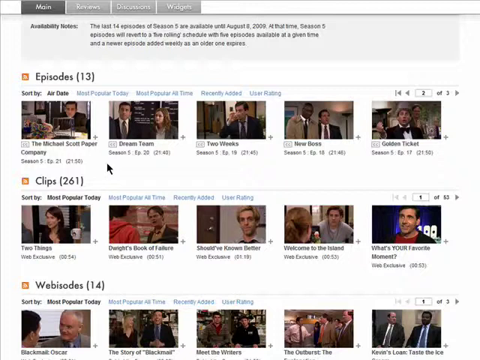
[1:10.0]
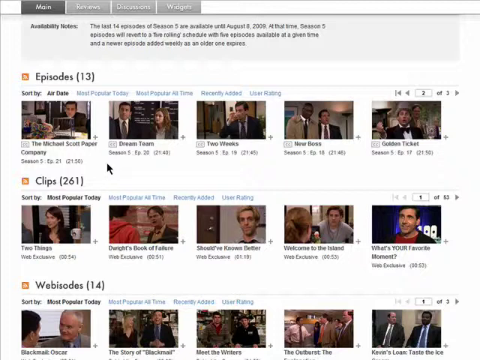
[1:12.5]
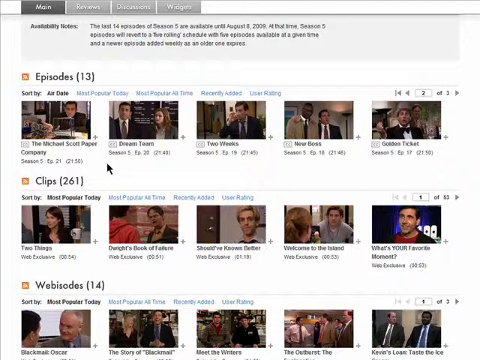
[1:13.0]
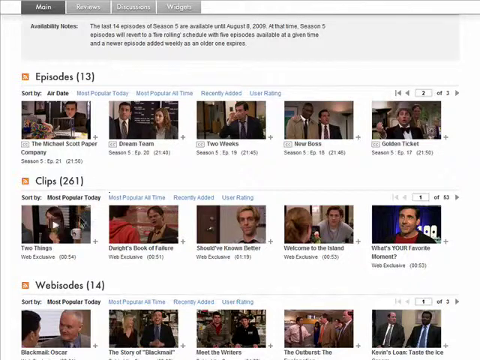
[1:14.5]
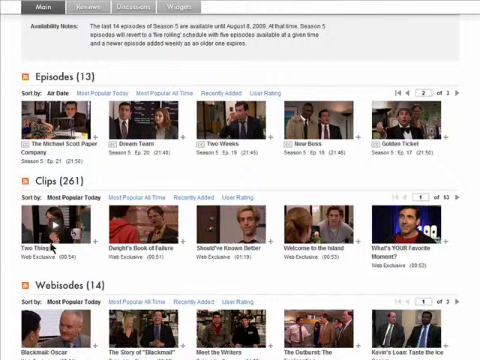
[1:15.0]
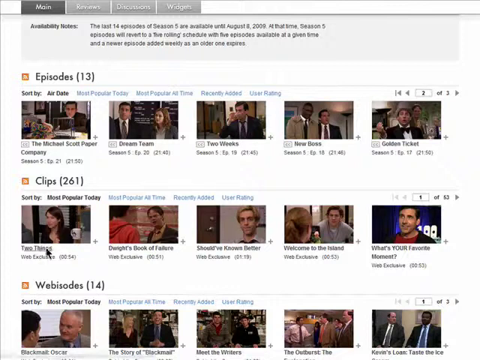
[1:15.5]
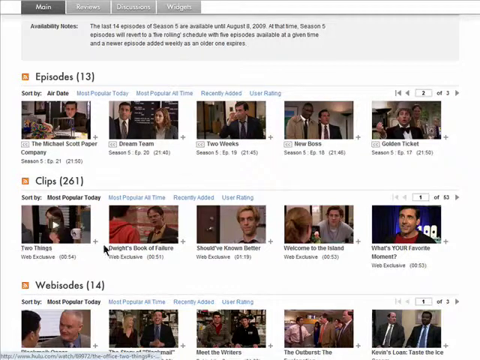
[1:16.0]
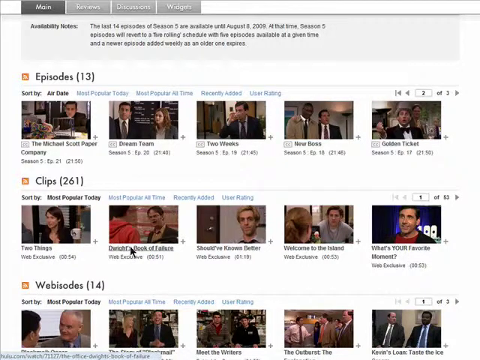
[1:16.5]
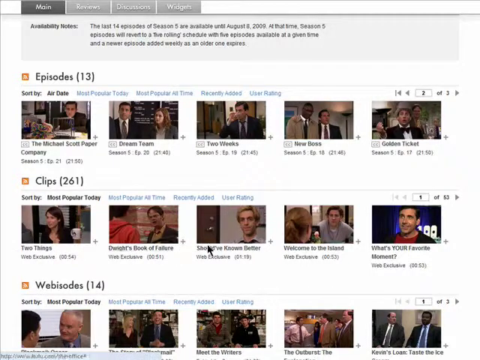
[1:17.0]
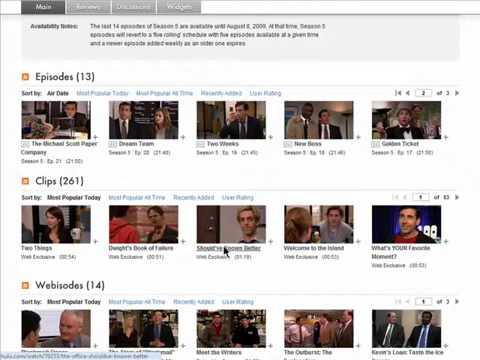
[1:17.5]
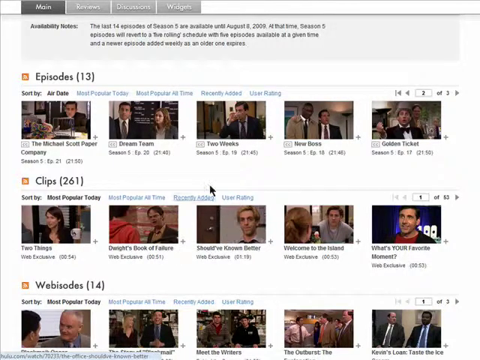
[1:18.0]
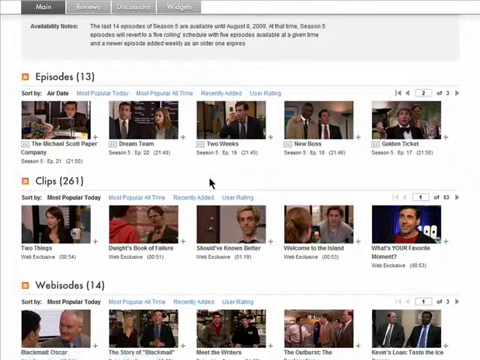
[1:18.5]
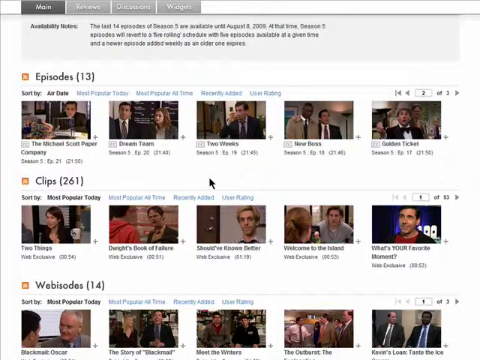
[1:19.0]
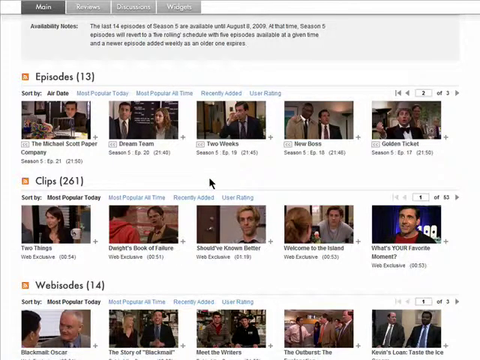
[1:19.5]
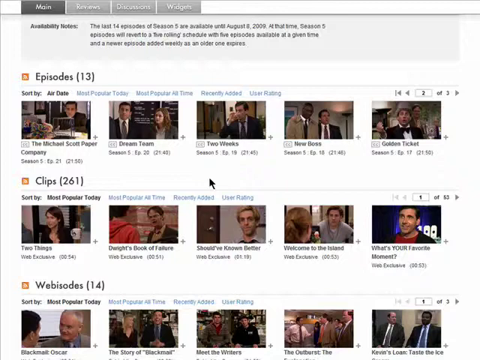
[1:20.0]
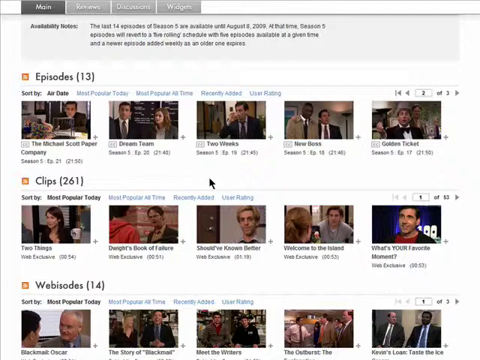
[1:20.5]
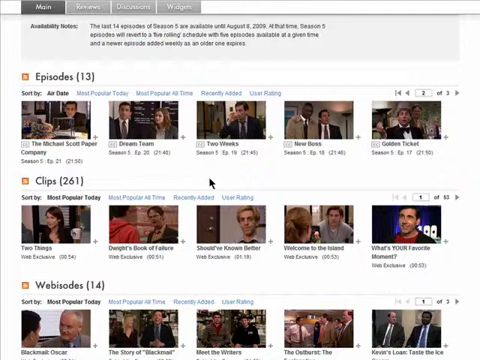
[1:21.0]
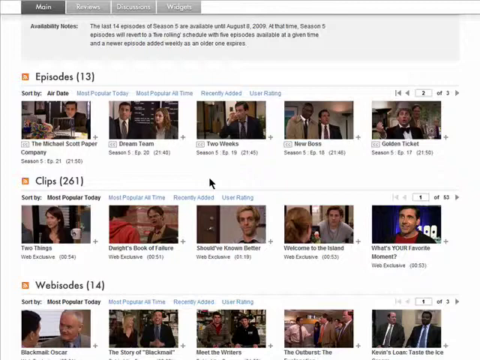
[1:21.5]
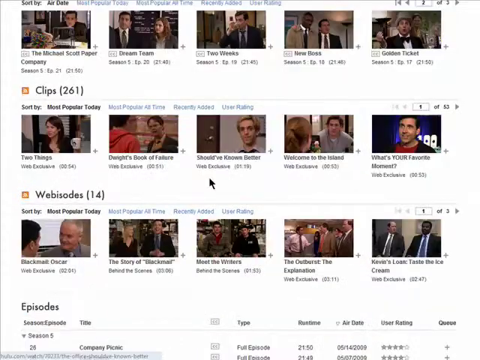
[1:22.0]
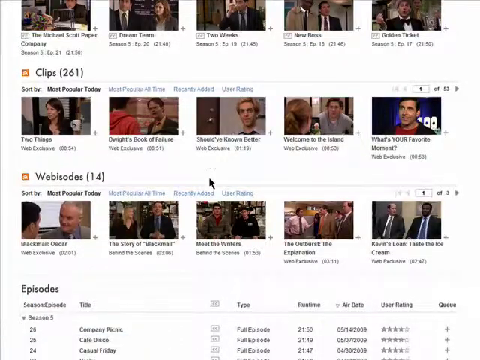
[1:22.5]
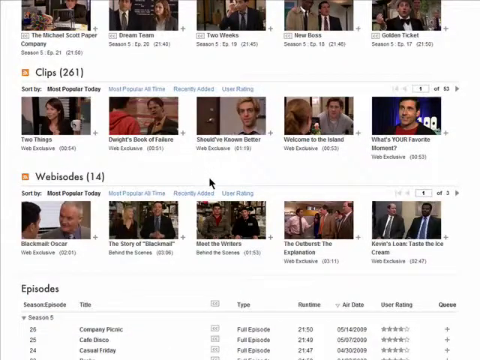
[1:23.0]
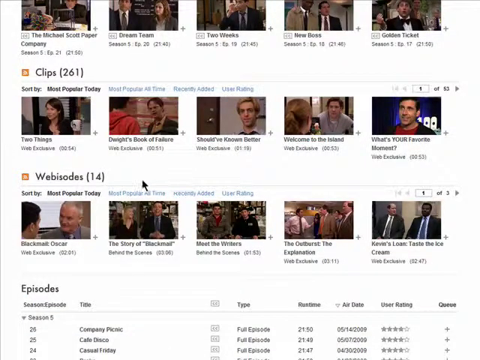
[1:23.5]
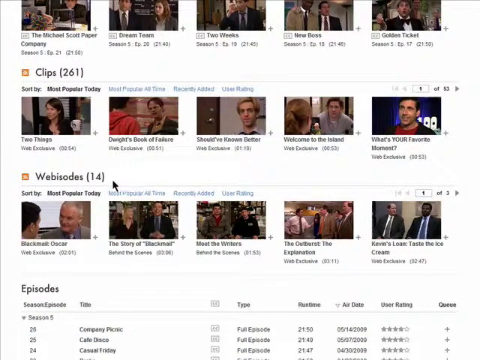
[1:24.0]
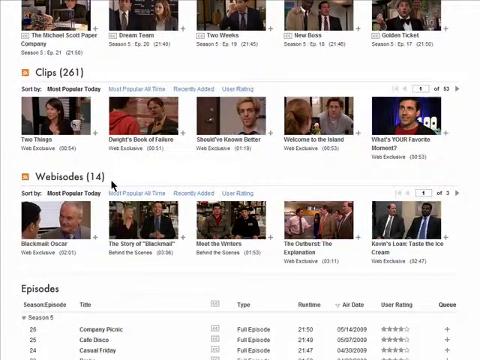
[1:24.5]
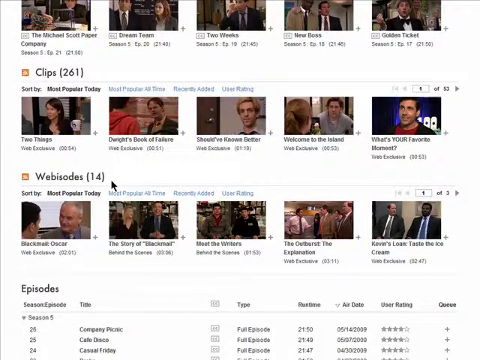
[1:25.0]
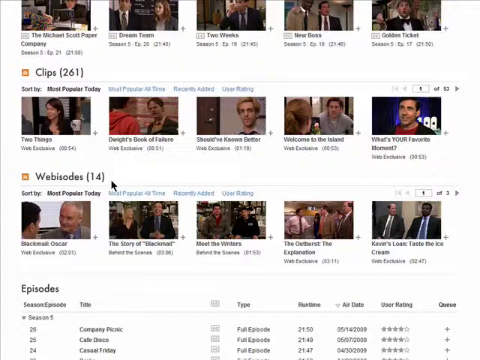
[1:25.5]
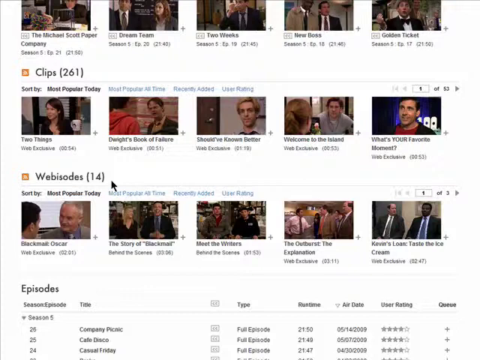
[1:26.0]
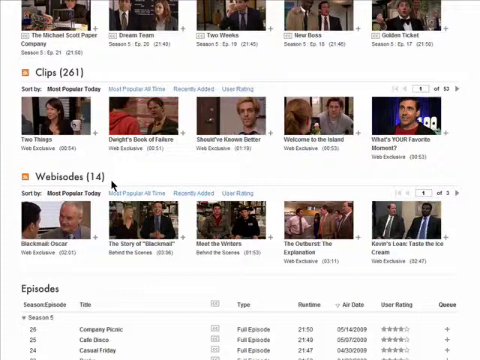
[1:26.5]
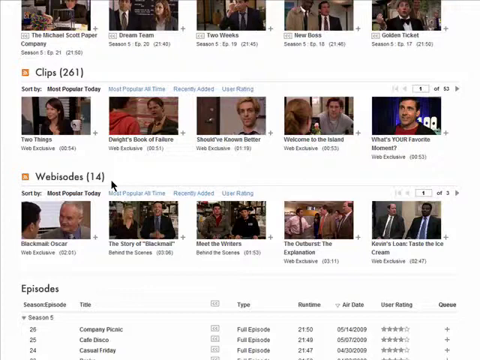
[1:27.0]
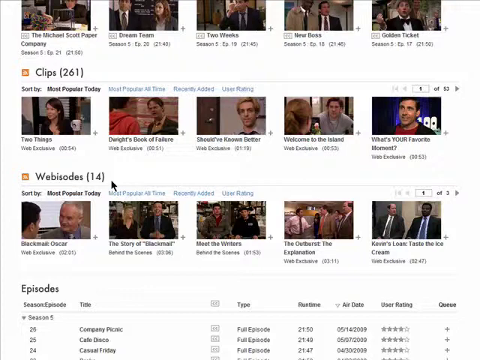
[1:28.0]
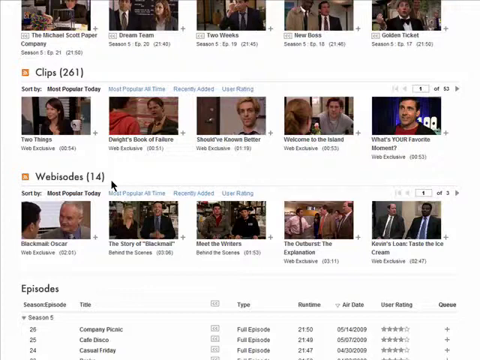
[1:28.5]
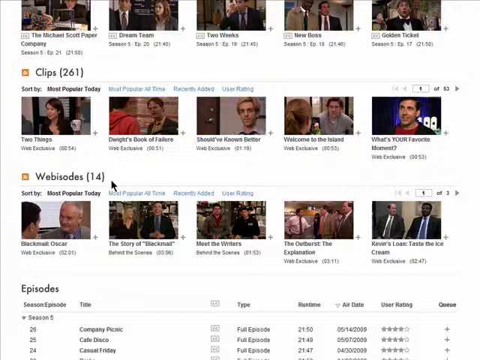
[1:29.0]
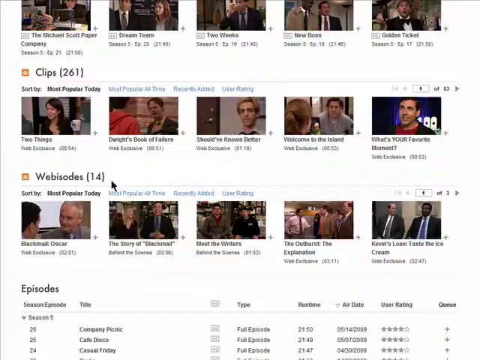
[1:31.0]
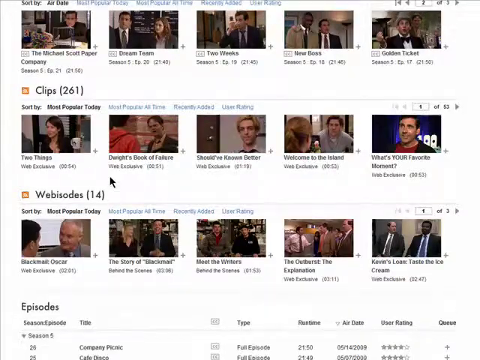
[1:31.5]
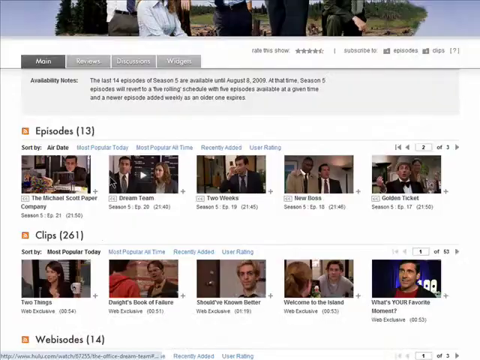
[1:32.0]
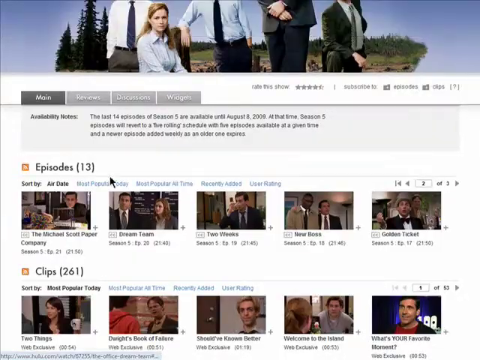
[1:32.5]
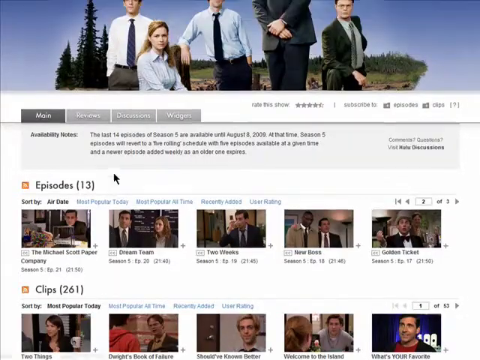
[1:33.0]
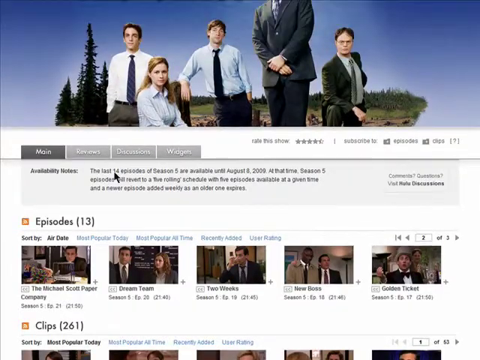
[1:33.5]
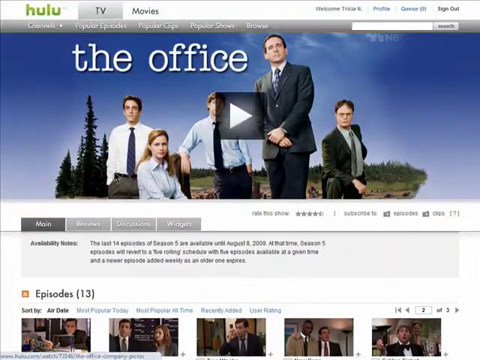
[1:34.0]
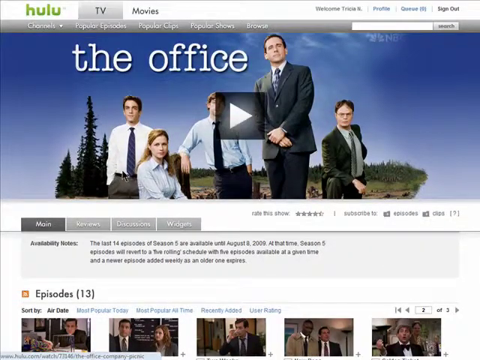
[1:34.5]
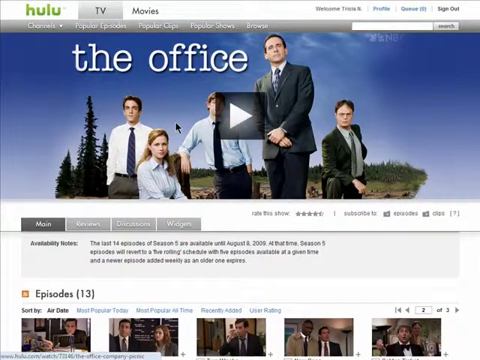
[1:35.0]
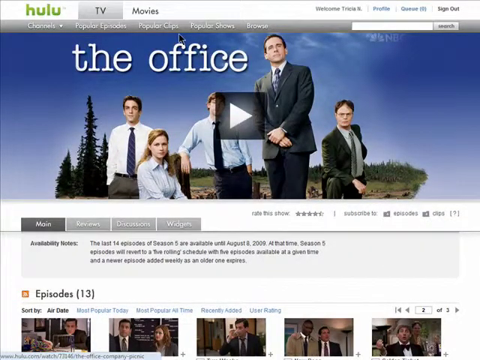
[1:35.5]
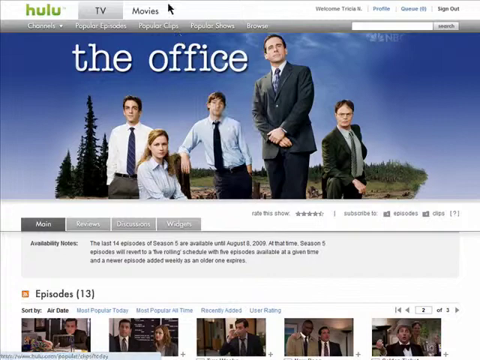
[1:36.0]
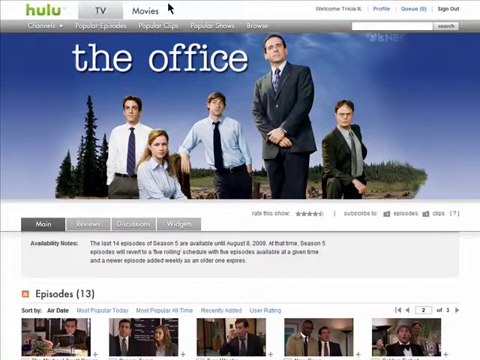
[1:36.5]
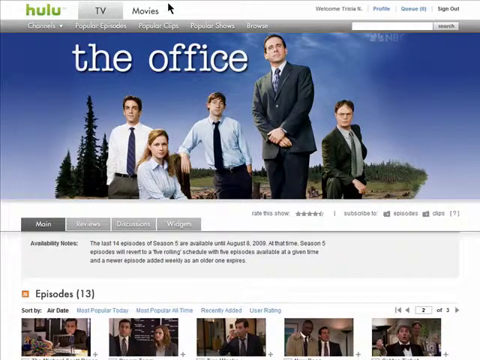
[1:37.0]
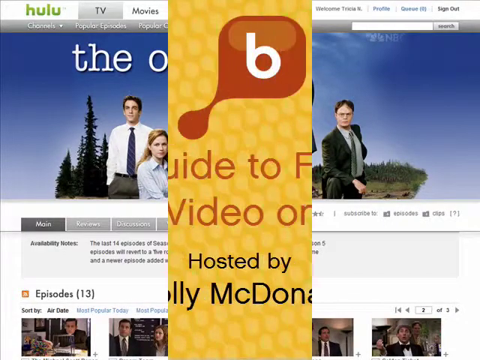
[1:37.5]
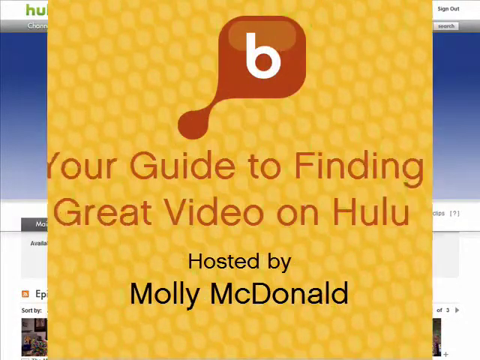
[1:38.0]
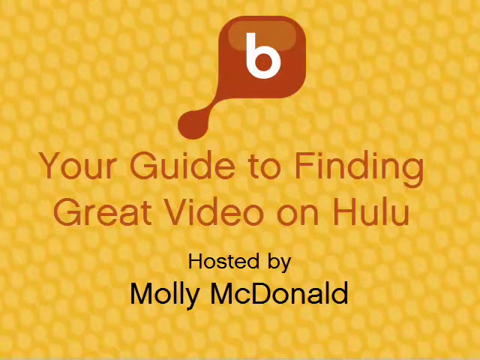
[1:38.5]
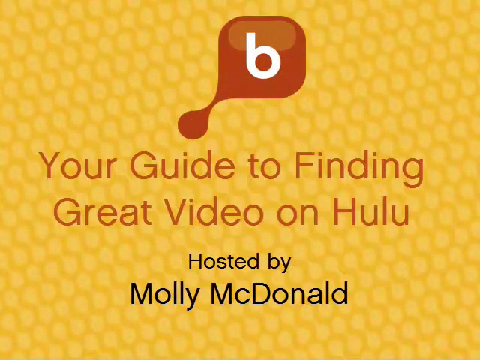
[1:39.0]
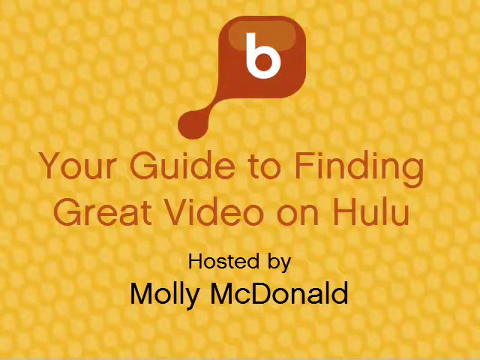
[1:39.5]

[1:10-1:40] The screen is still on the episodes page of The Office, with the user's cursor under the second episode on the first row. She moves the cursor down to the first episode on the second row, then all the way over to the clips toward the middle of that row, and back up. She scrolls down to the webisodes, pointing the cursor at "webisodes 14." The page scrolls down and back up, and she moves over to a button that says "Movies." When she clicks it, the screen changes back to the page showing 13 episodes: the first row shows "episodes 13," the second row "clips 261," and the third row "Webisodes 14." The cursor remains under the second episode on the first row.